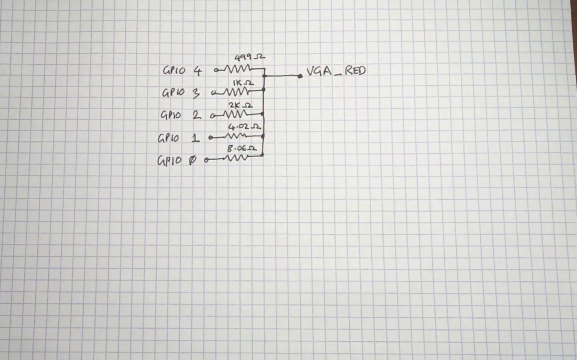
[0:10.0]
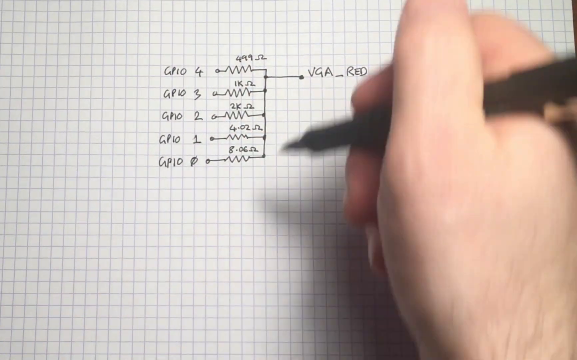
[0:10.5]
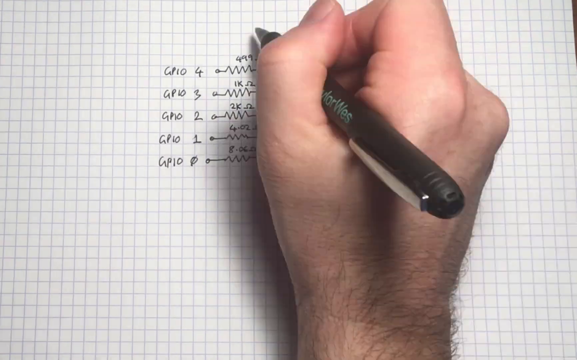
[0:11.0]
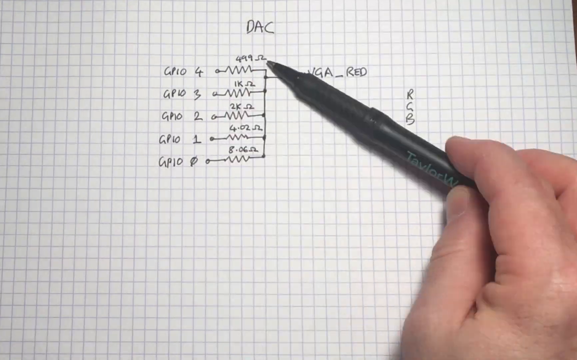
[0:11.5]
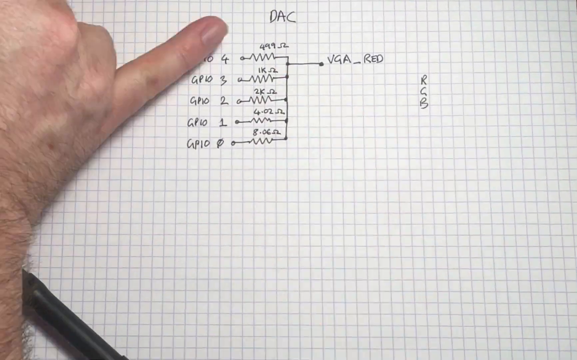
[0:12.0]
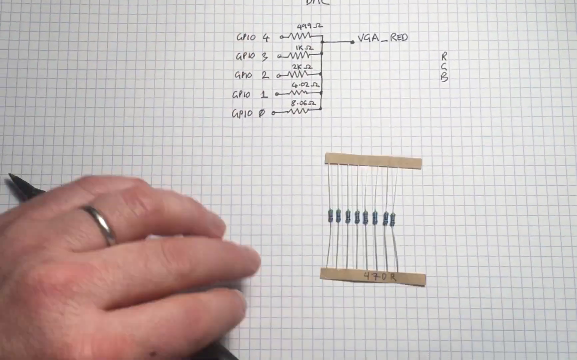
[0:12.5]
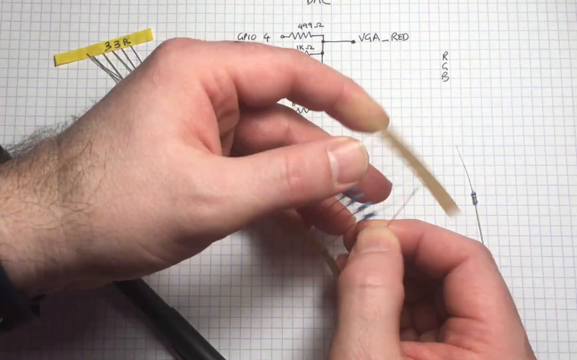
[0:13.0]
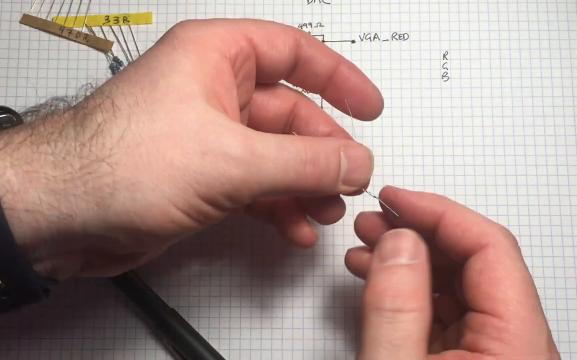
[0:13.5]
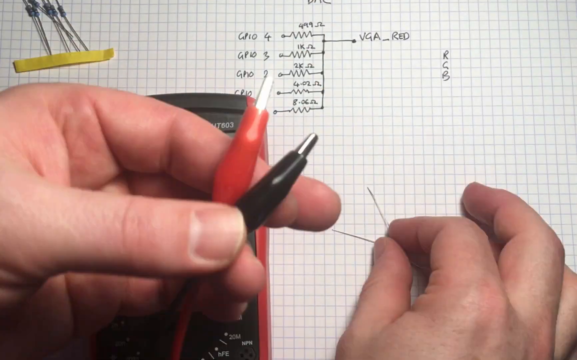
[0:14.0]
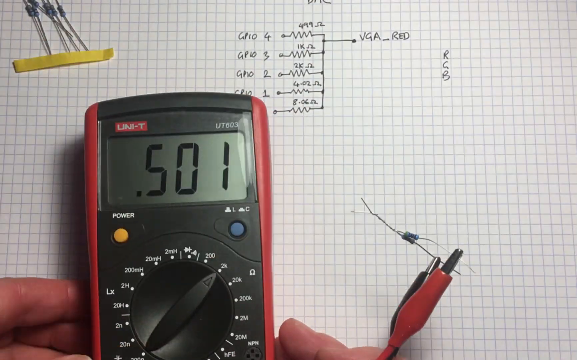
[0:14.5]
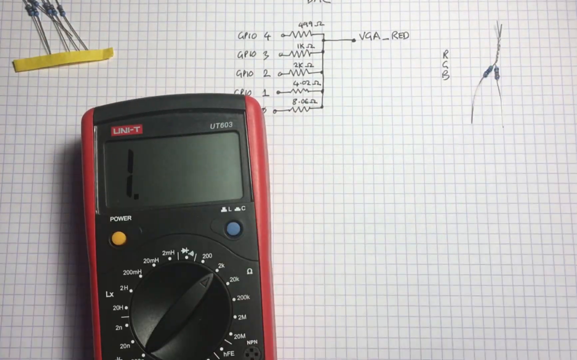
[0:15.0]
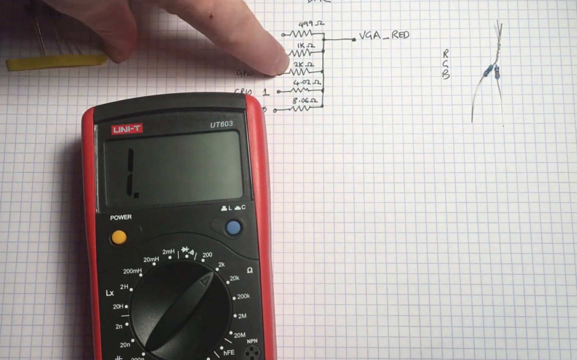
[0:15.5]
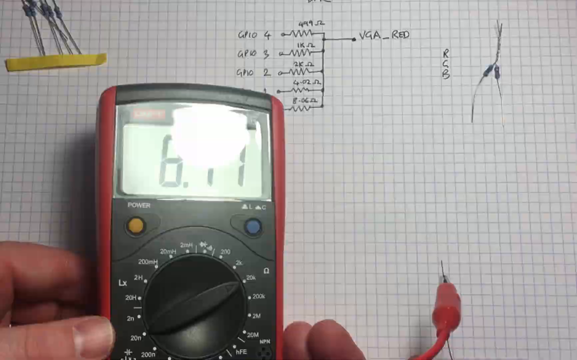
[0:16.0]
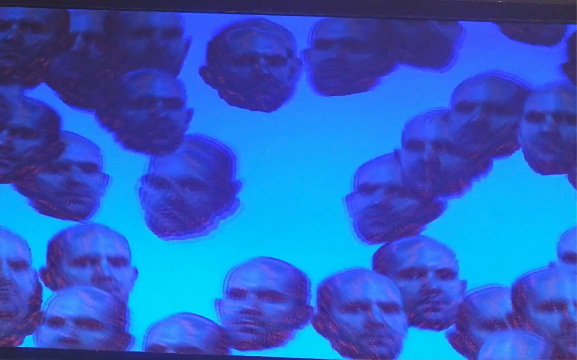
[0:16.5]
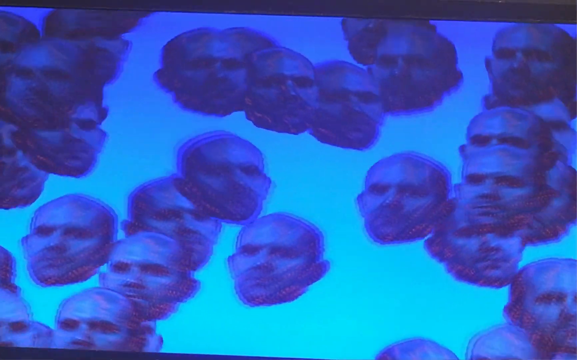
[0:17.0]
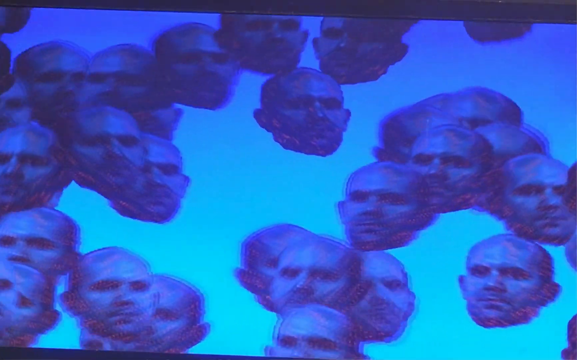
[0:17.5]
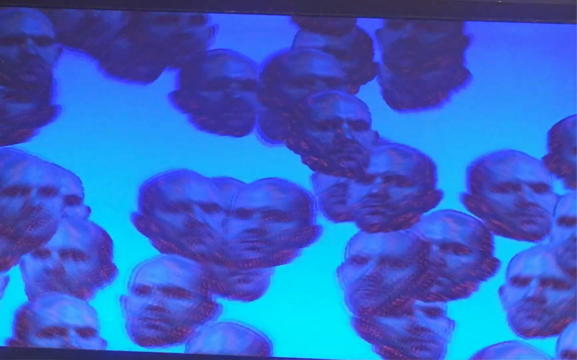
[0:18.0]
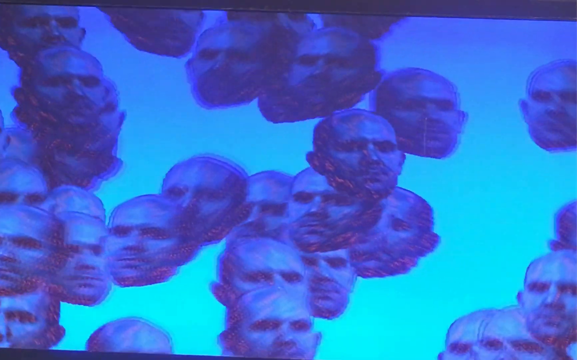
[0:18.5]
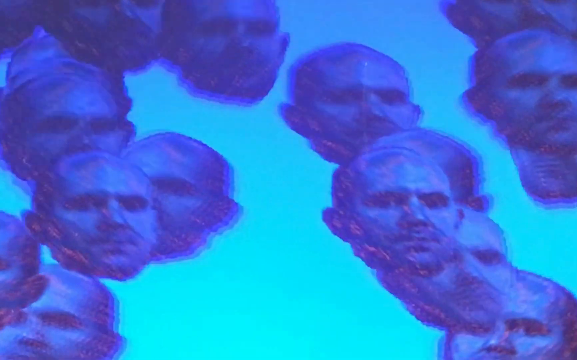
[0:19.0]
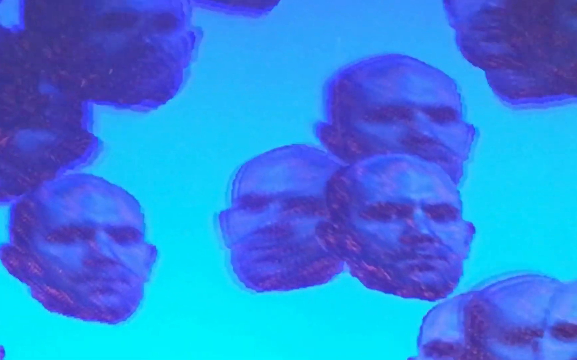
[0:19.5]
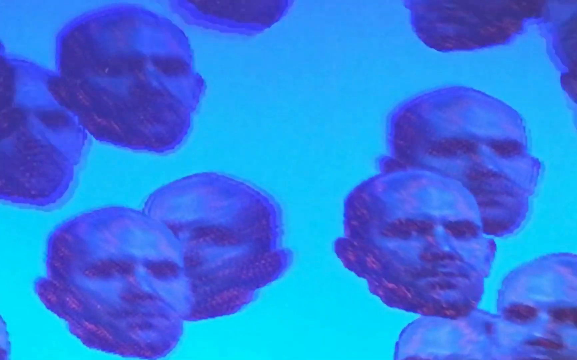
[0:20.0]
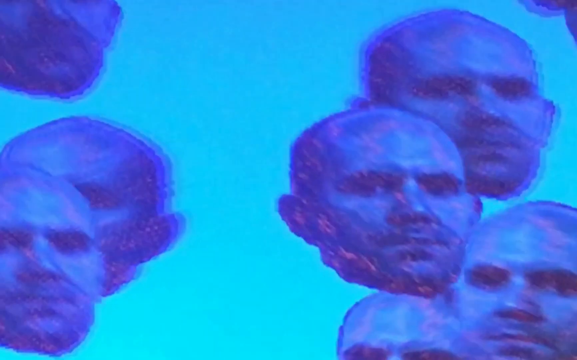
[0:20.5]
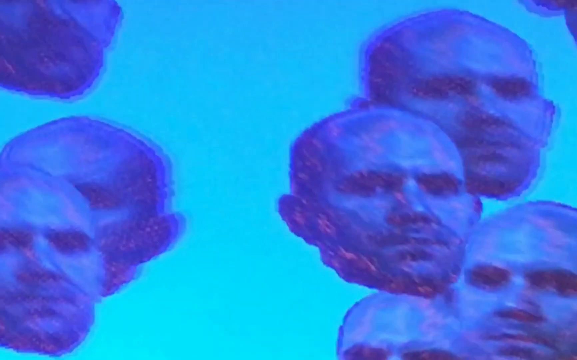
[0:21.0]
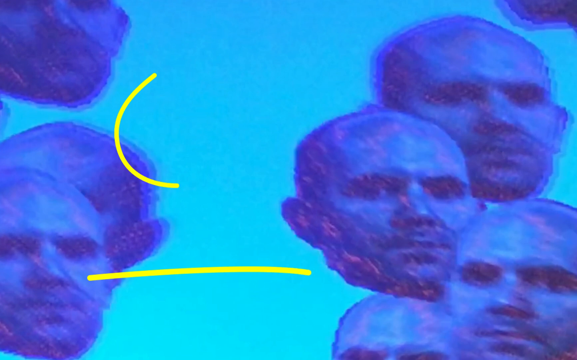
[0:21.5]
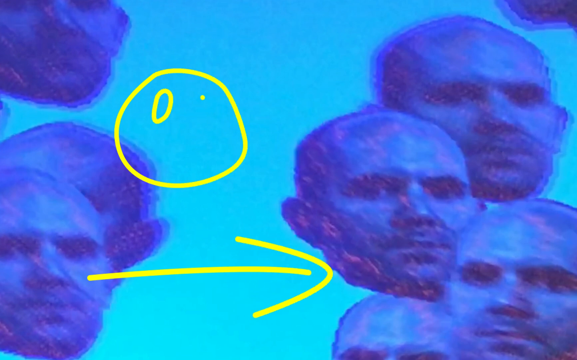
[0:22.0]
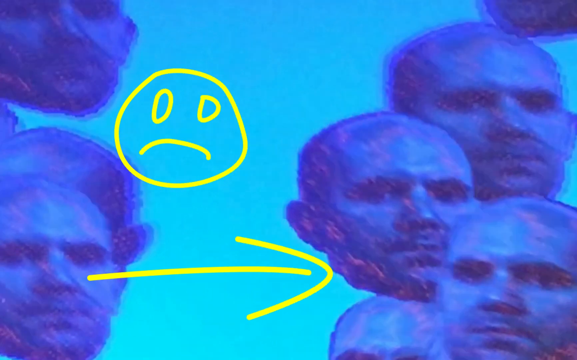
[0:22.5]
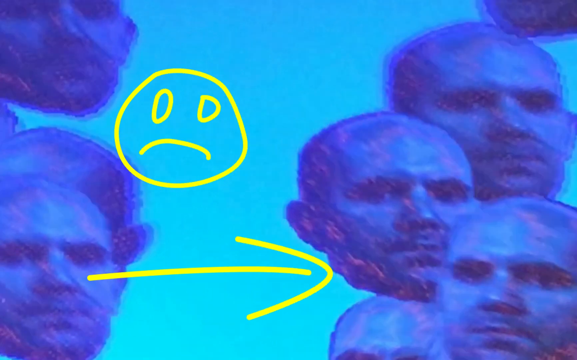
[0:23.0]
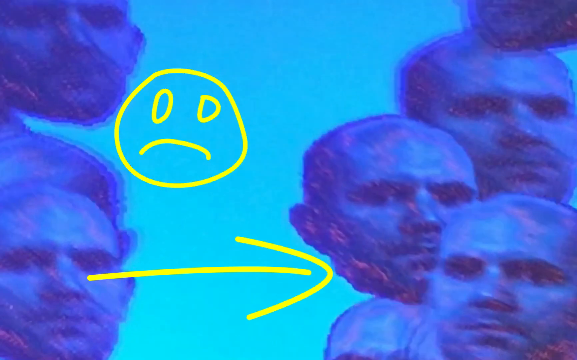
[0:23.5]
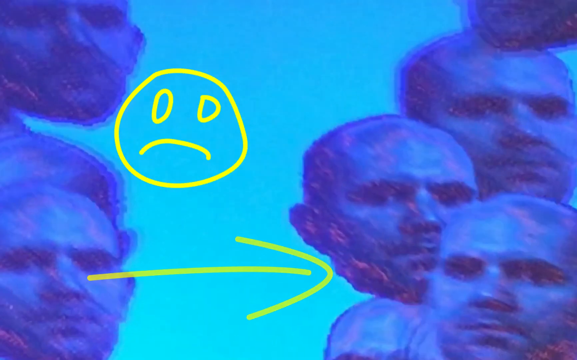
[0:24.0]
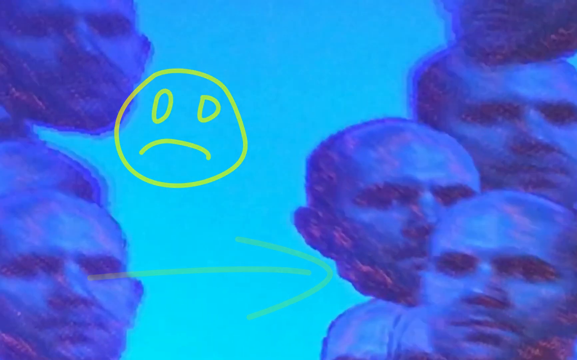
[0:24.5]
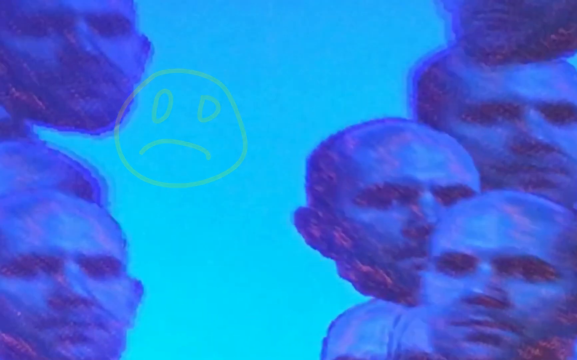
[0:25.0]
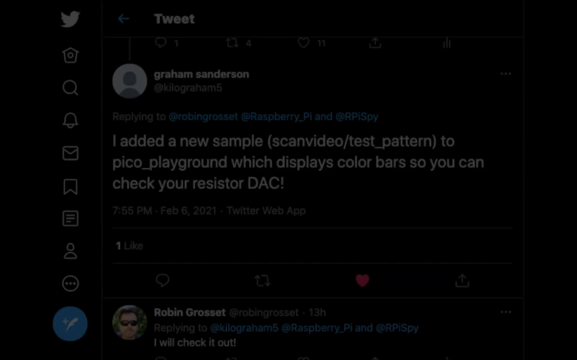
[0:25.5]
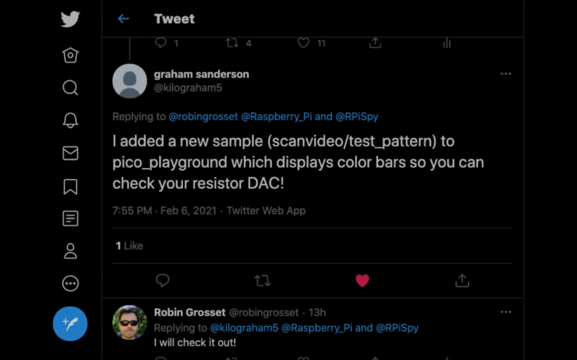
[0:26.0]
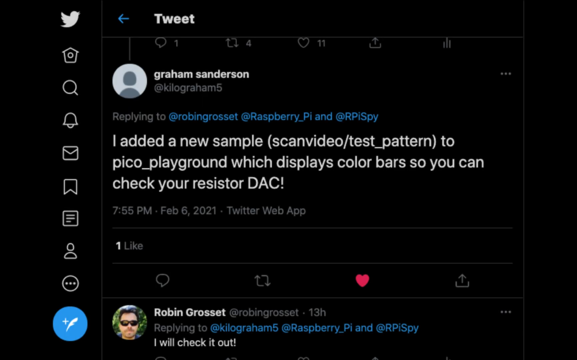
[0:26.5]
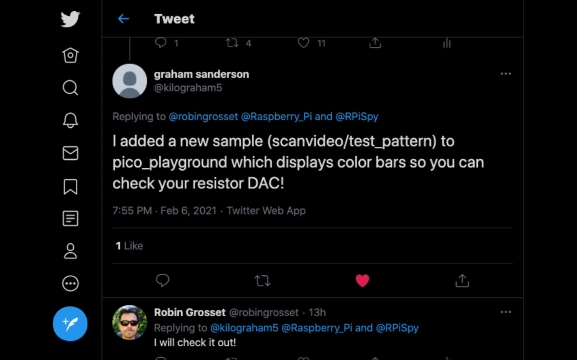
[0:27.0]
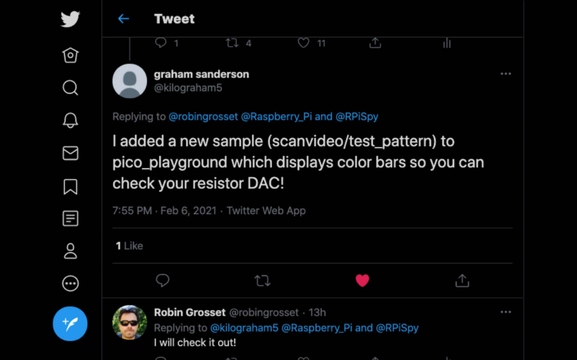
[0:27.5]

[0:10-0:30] A close-up shows a sheet of paper with small blocks or squares, on which someone has written some sort of diagram for VGA Red, roughly in the middle. The person's hand, holding a pen with black ink, enters the frame and writes more; this is sped up, and the hand moves very fast. Next the person has some objects in hand as if about to make something: apparently a voltmeter and a lot of little wires. The sped-up footage is very fast and hard to follow. They twist the wires and then work with the voltmeter and the wires. The video transitions to swirling heads of a man in shades of blue, floating around without hitting one another. The video stops, a frowning face is drawn on it in yellow, and an arrow points to one of the man's faces, suggesting he is upset. The video then transitions to a post on X, formerly known as Twitter.